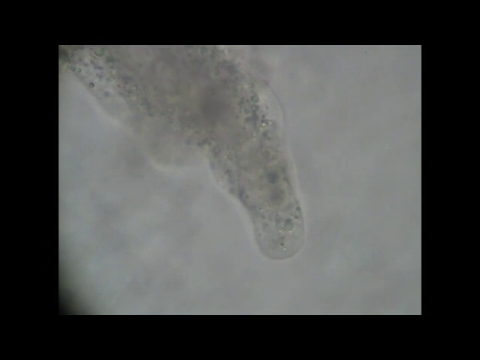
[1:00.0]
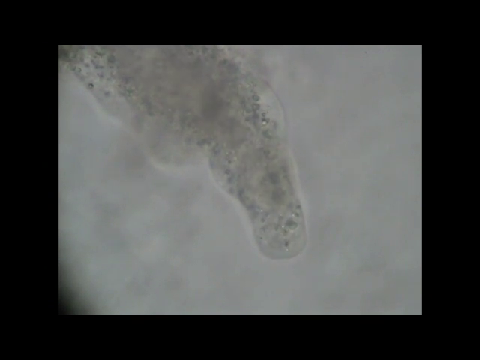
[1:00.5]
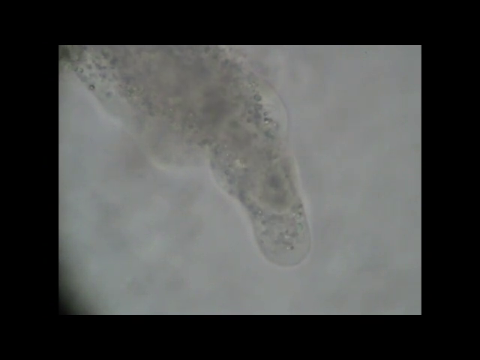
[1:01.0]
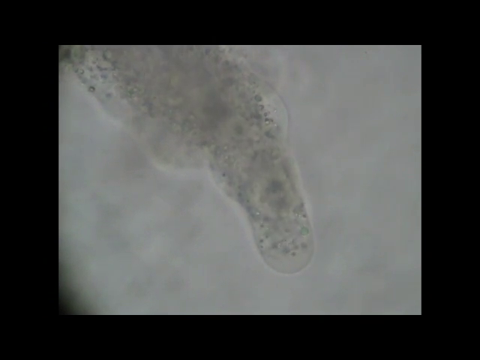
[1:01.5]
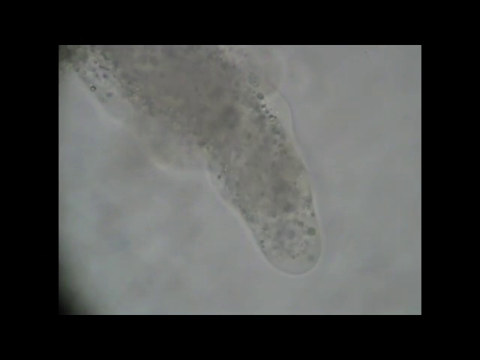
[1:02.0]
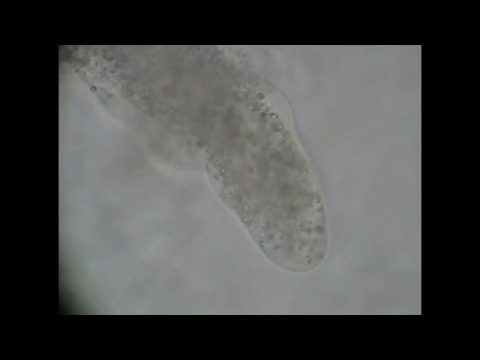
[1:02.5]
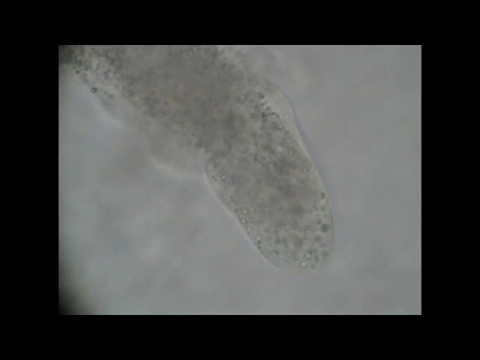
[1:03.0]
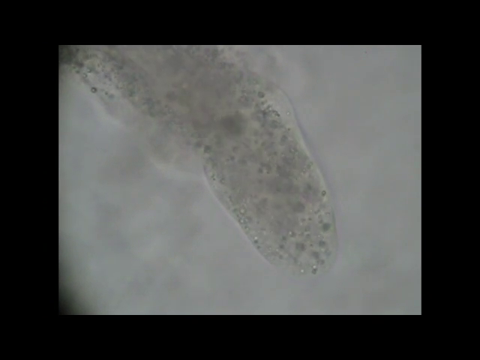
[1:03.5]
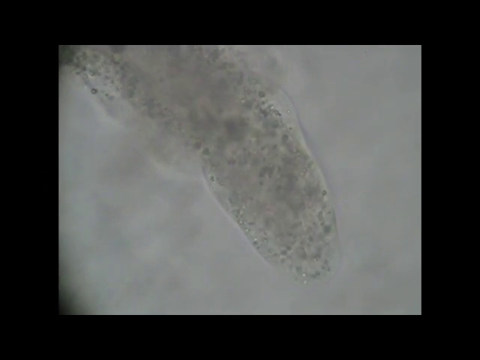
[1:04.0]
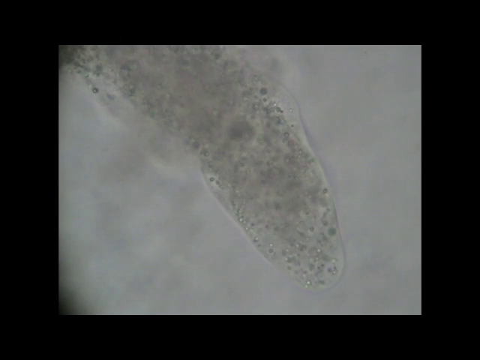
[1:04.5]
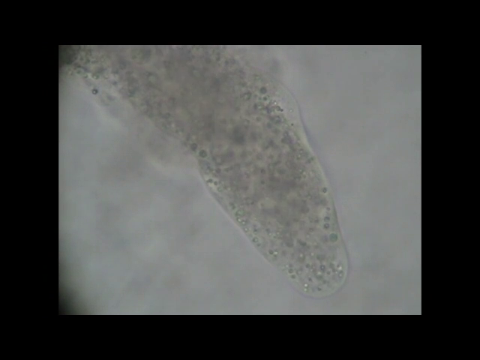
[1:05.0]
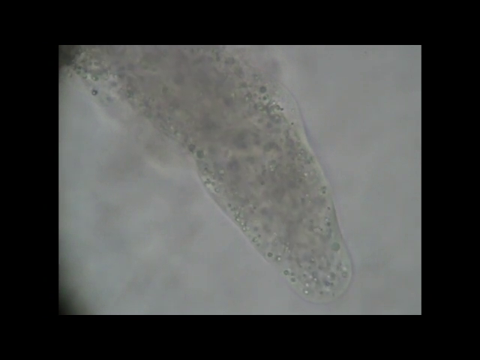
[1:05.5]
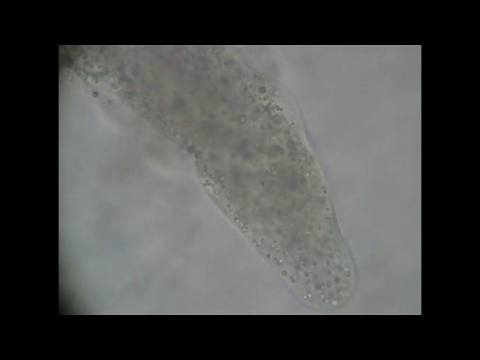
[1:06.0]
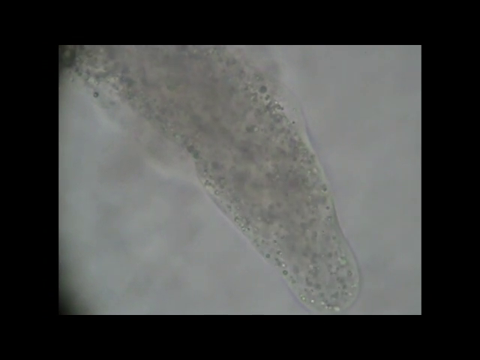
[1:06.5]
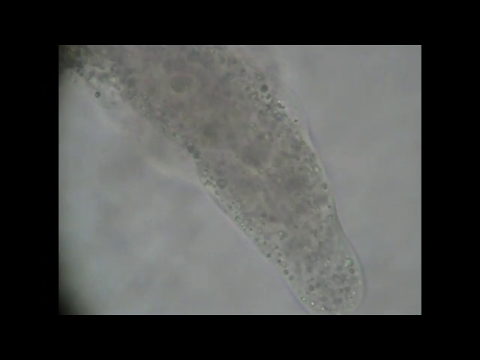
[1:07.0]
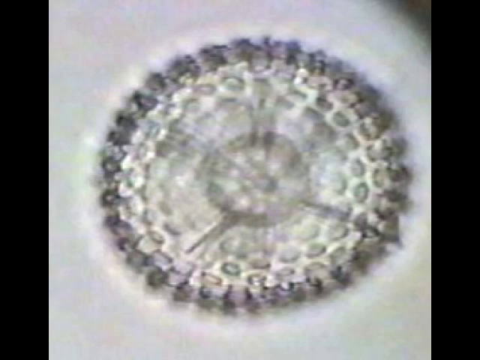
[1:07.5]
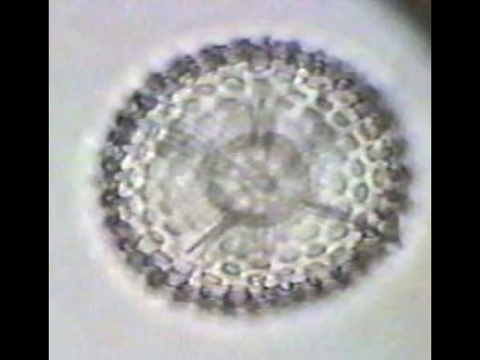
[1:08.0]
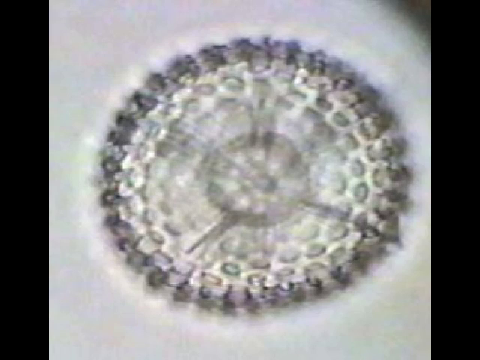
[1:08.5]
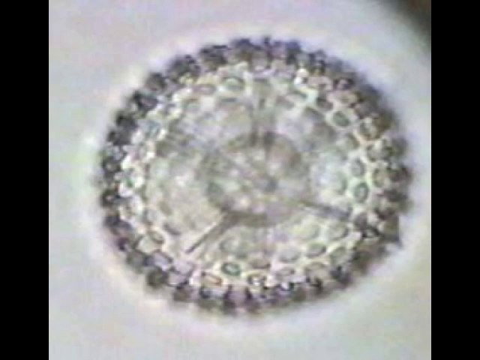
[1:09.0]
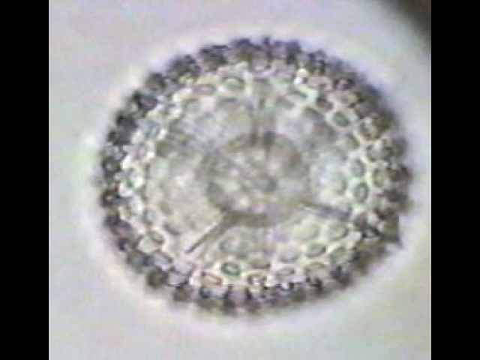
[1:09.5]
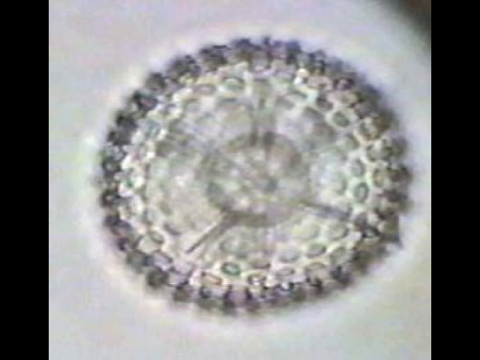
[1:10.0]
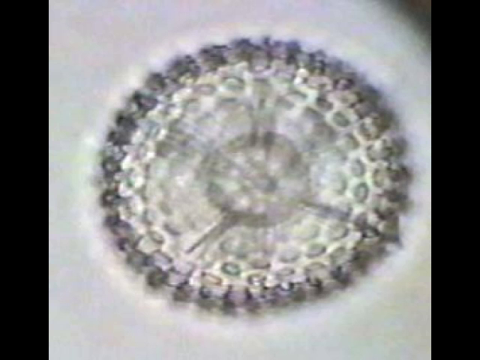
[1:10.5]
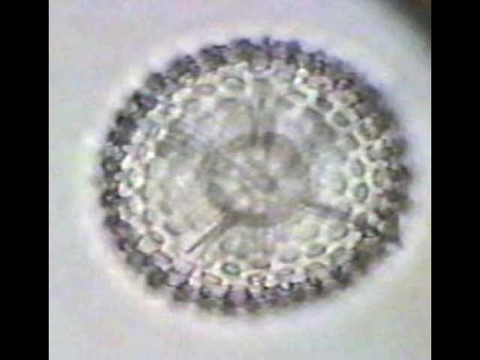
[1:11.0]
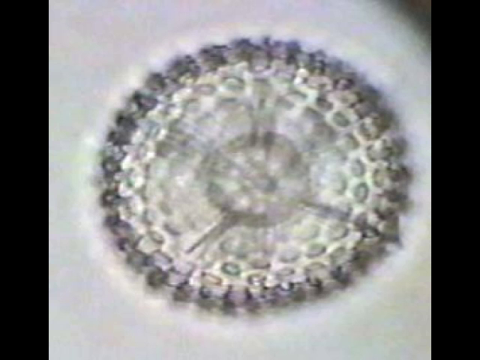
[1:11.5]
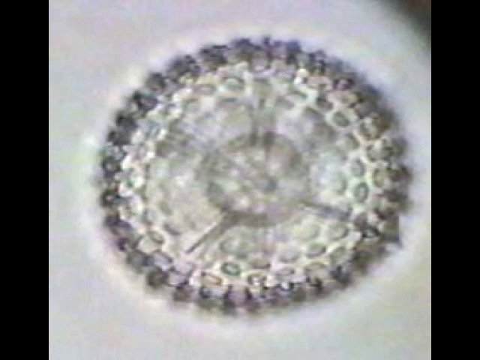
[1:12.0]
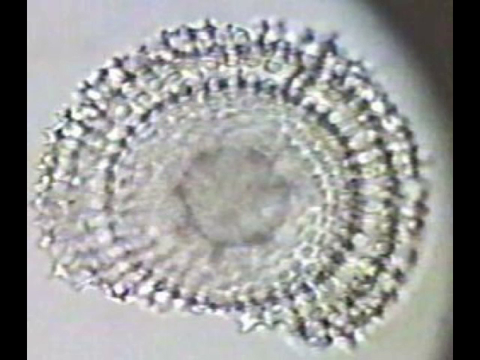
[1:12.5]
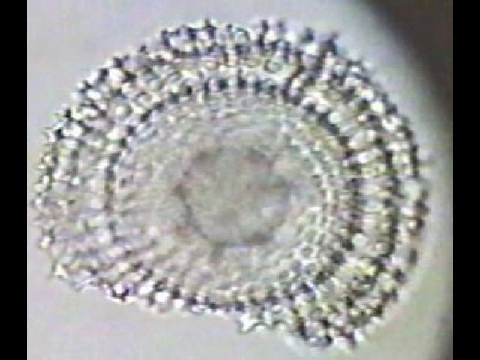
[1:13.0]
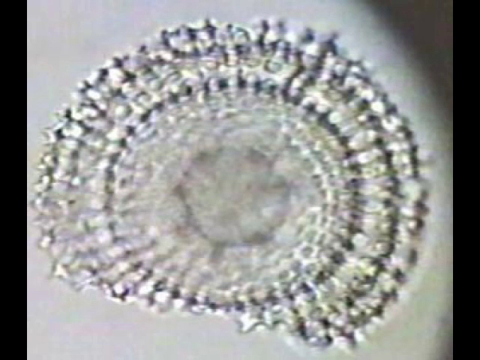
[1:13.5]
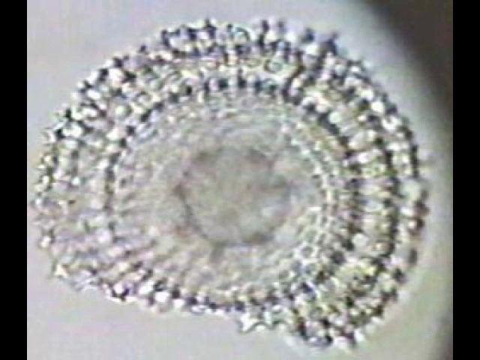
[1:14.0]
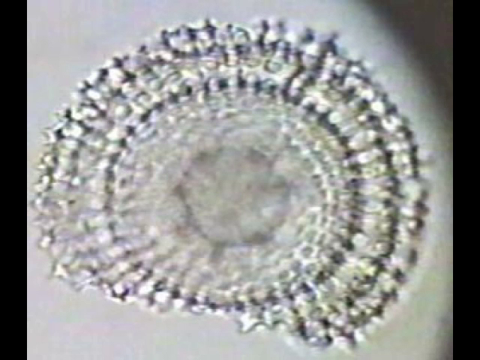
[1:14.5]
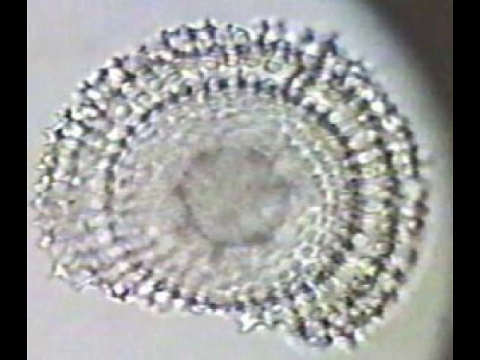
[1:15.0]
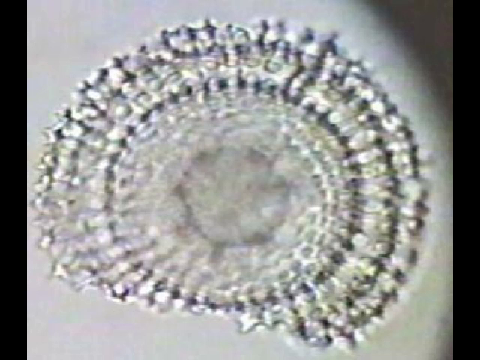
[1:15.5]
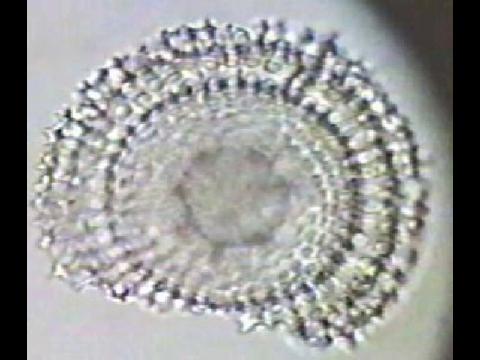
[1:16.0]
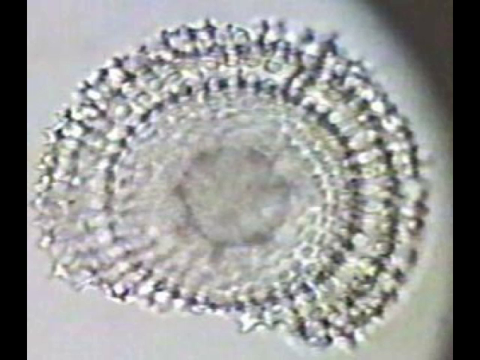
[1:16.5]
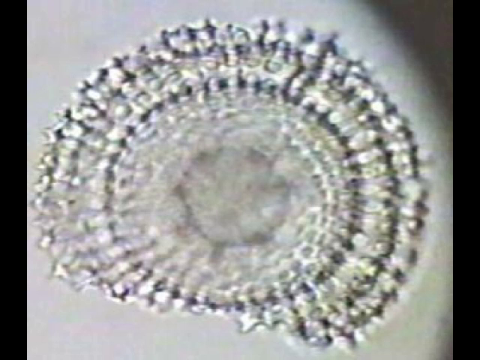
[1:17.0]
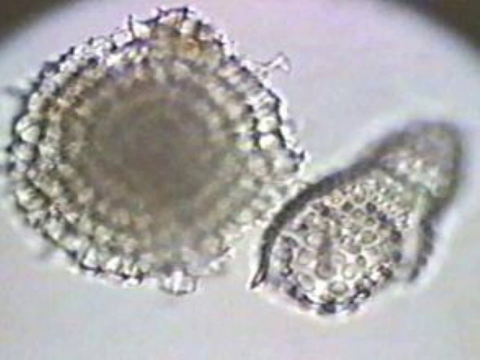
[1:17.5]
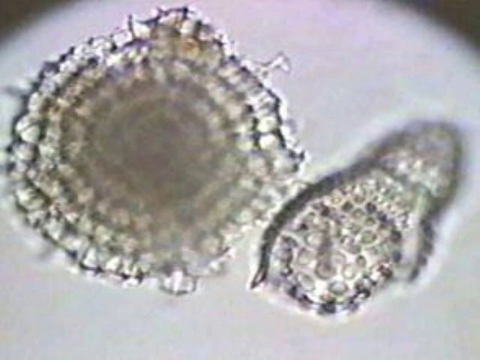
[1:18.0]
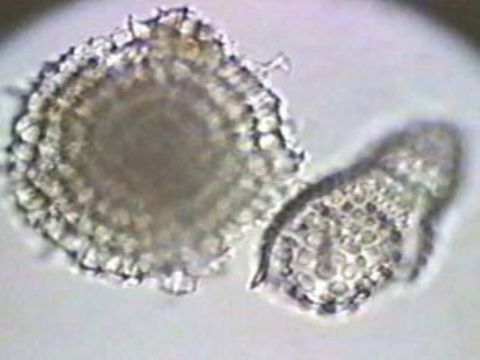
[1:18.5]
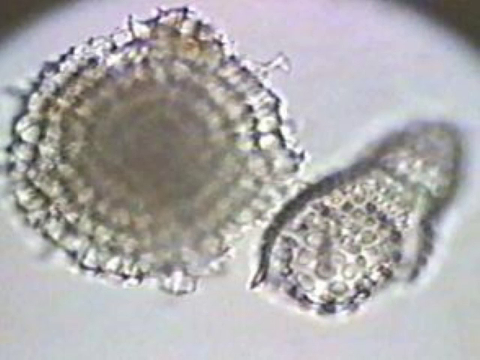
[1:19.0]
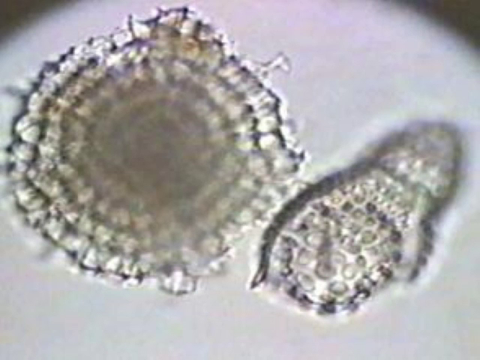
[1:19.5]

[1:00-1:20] The group of cells keeps moving, now from the top left down toward the bottom right across the screen under the microscope. The image is black and white, with no color visible in any of the cells. There are tiny dots, some clear, some white and some darker, contained within almost translucent walls they cannot pass, yet the whole moves somewhat like liquid. Another black-and-white image follows, showing something like a circular galaxy: a very large circle in the center with a smaller sphere inside it, and what almost look like rays coming off it, surrounded by smaller circles. It looks like a sphere with smaller spheres or circles embedded in it; from the angle it is hard to tell whether it is flat, concave or convex. If it were a single cell, the interior might be the nucleus and the smaller circles might be on the cell's exterior. The smaller spheres look translucent and each seems contained in its own wall, so they look almost like bumps atop the one circle. Another image then shows what looks like the original brown sphere with tiny bumps or bubbles on it, on the left; this one is not quite black and white, with a reddish tinge. On the right is an object shaped almost like a bug, with what looks like a head and a body that is a similar sphere with smaller circles on it, surrounded by a dark outline. Both look like they are made up of tiny cells or tiny spheres.